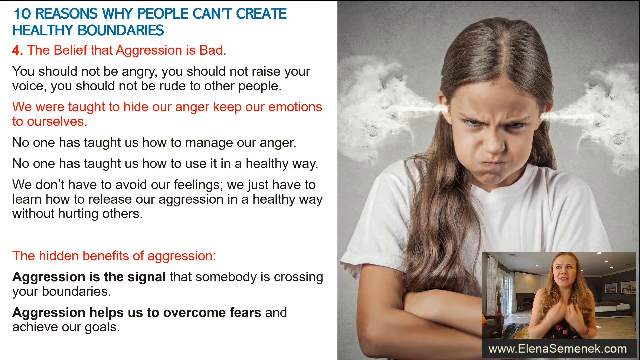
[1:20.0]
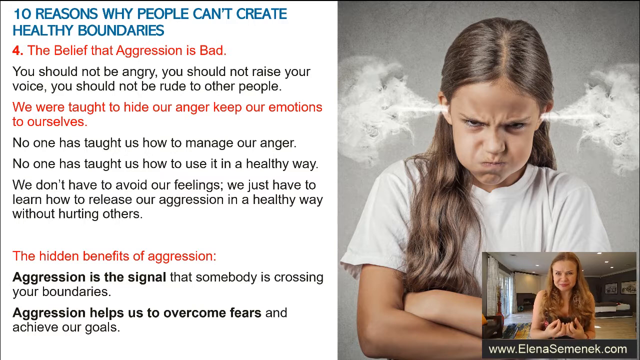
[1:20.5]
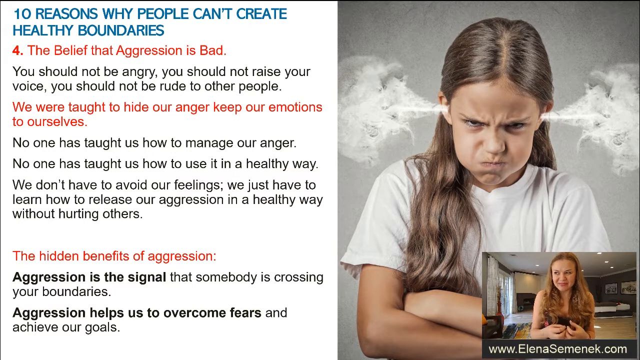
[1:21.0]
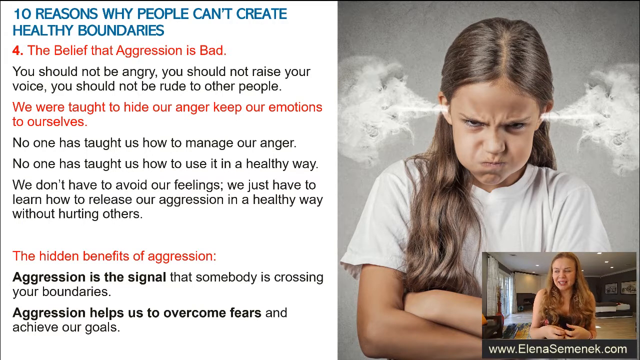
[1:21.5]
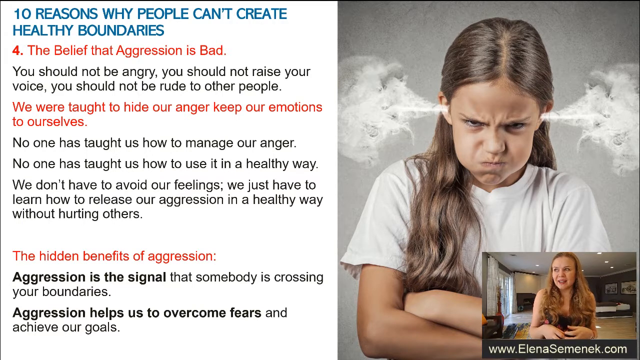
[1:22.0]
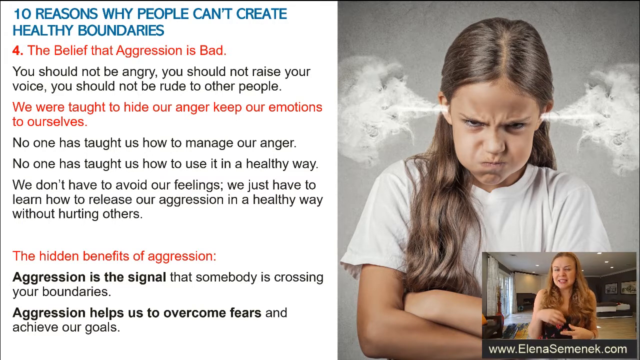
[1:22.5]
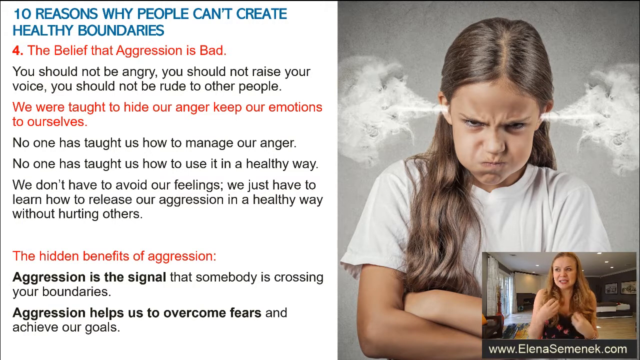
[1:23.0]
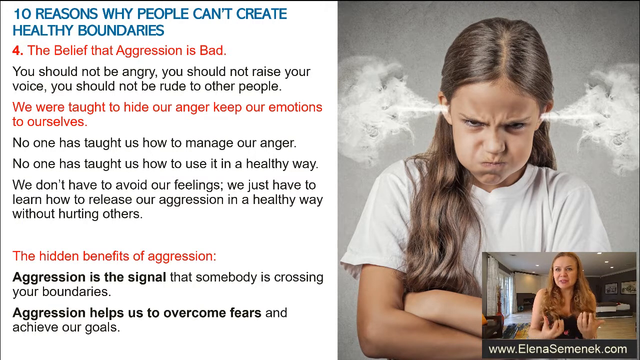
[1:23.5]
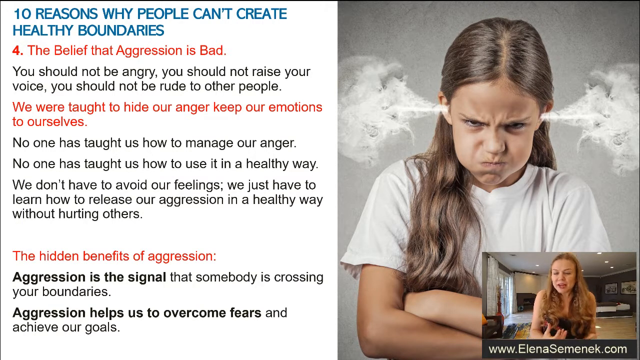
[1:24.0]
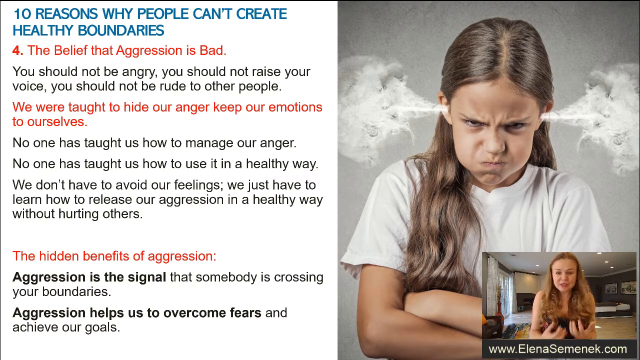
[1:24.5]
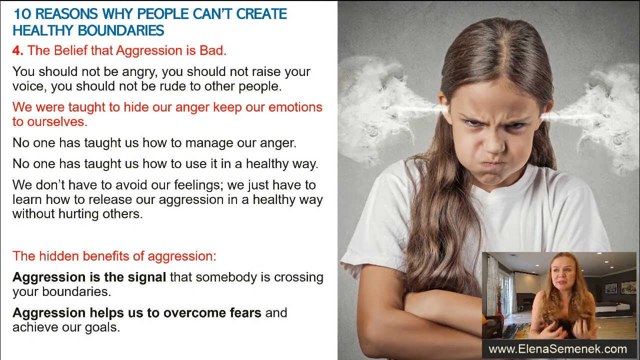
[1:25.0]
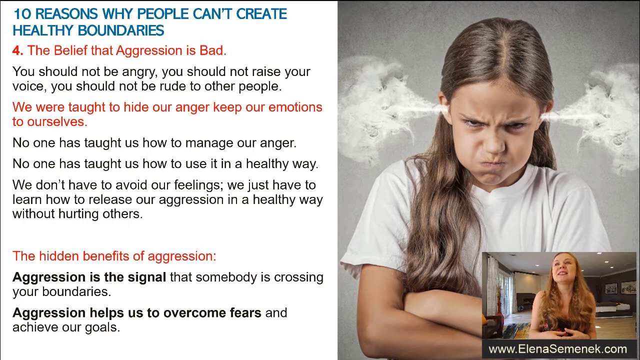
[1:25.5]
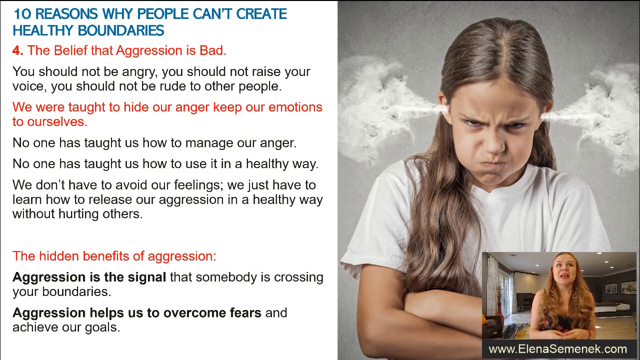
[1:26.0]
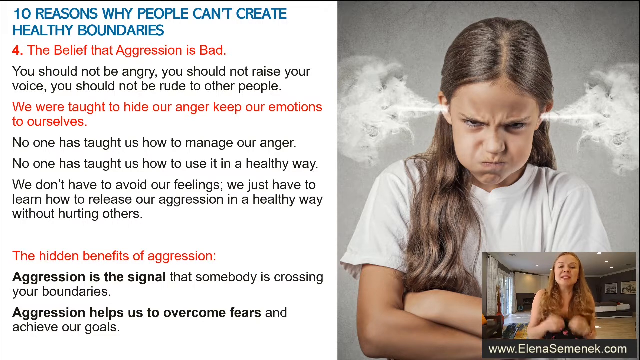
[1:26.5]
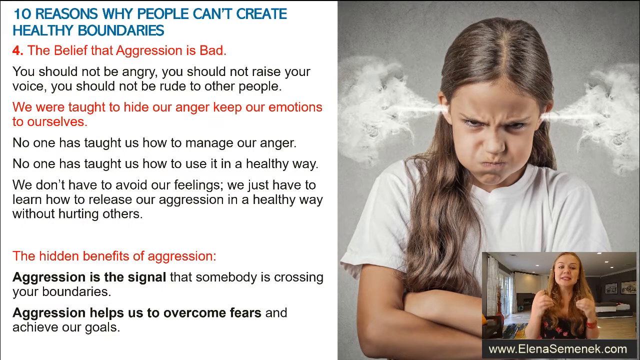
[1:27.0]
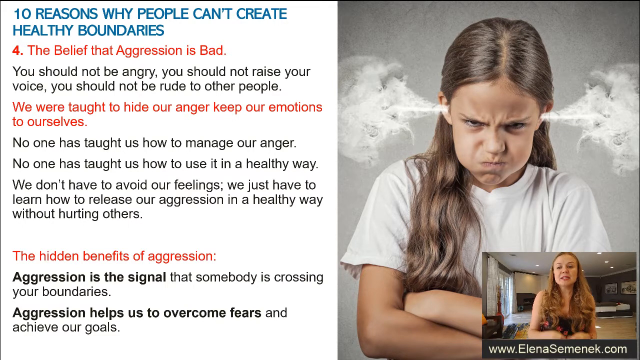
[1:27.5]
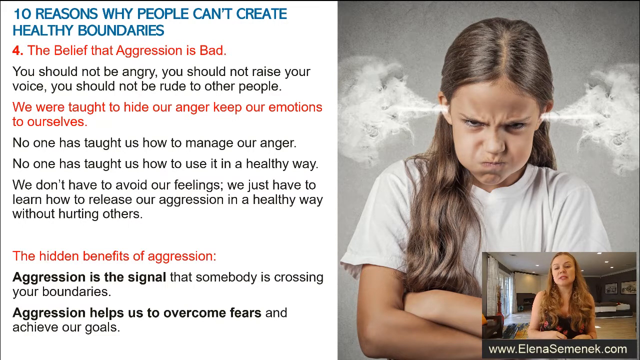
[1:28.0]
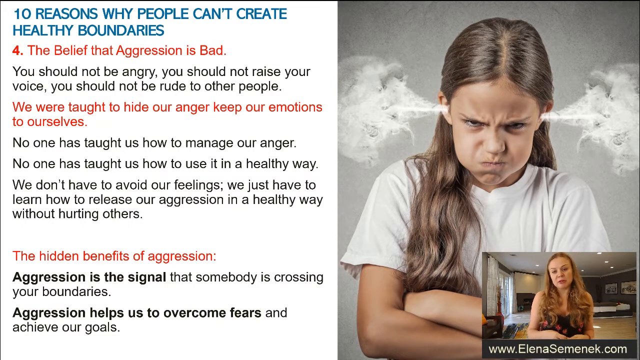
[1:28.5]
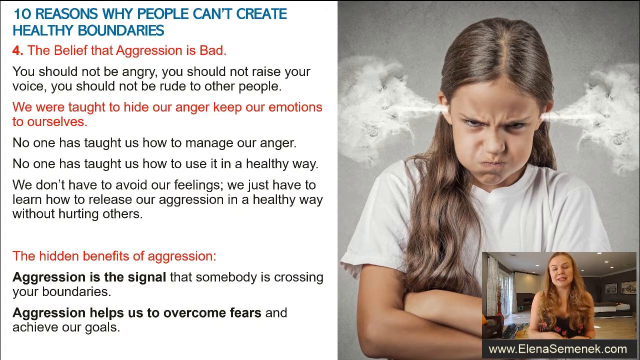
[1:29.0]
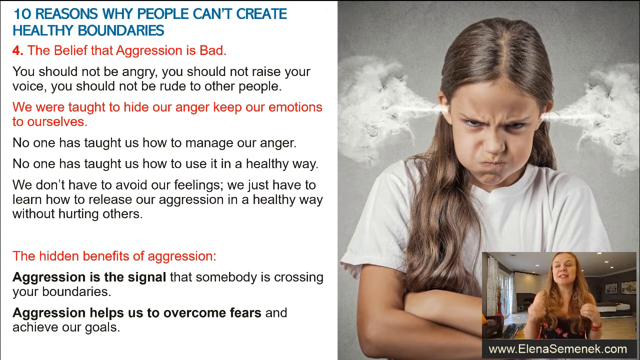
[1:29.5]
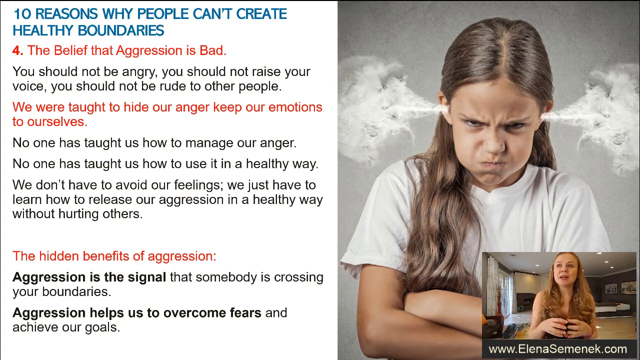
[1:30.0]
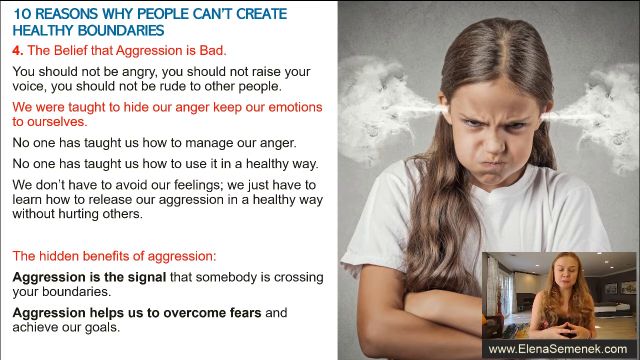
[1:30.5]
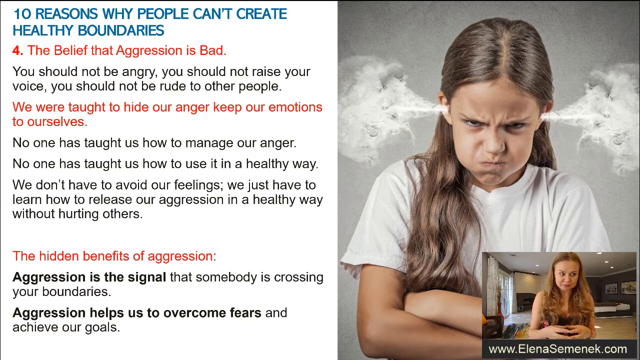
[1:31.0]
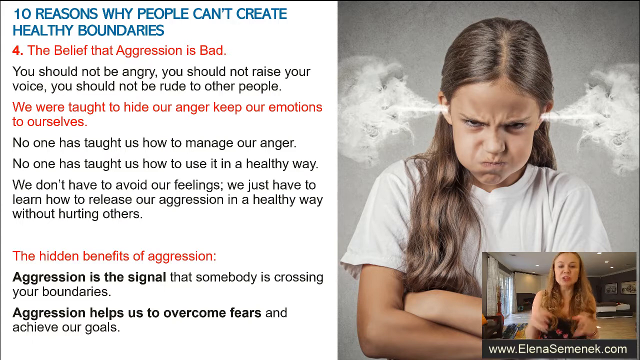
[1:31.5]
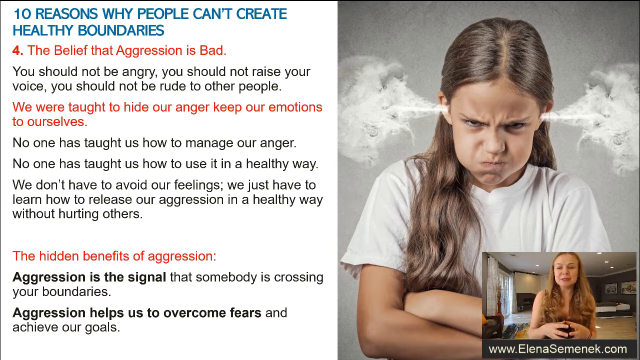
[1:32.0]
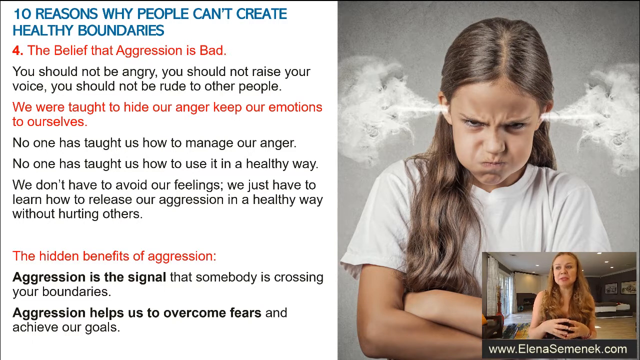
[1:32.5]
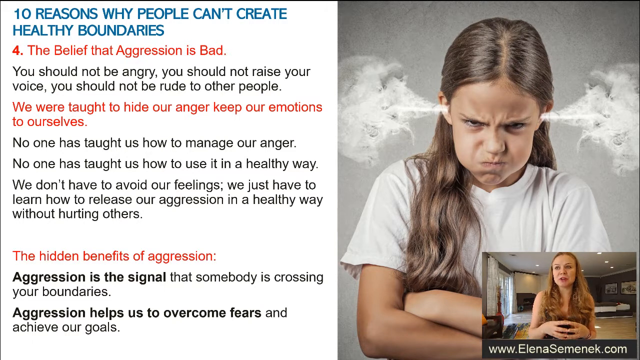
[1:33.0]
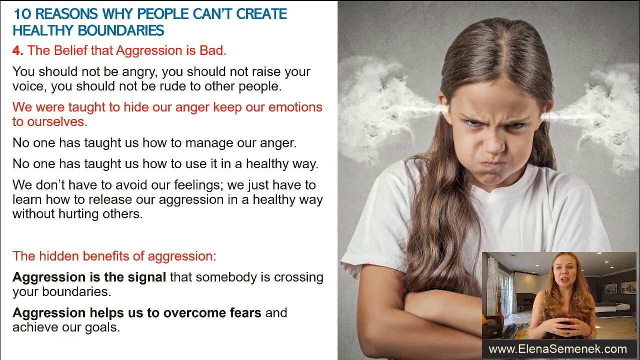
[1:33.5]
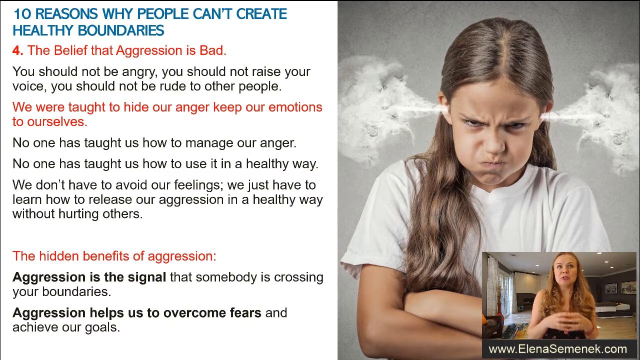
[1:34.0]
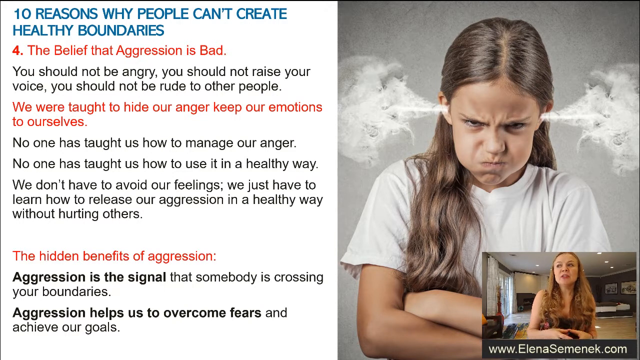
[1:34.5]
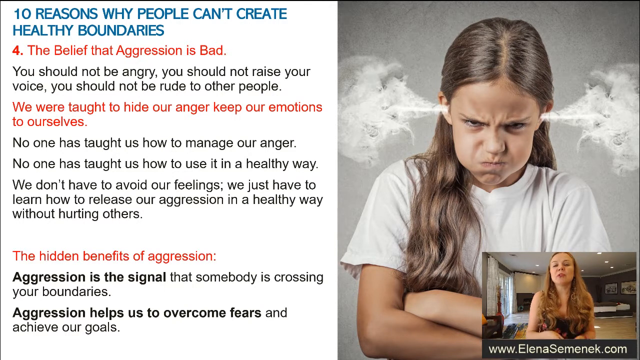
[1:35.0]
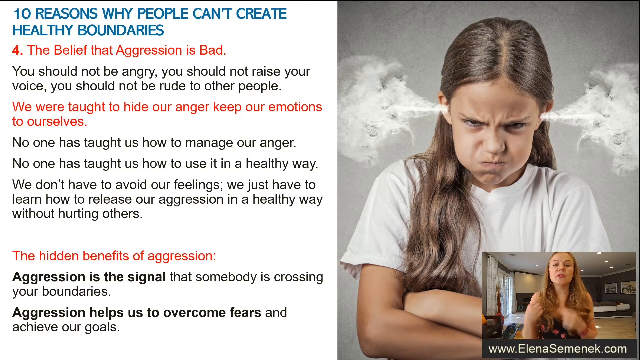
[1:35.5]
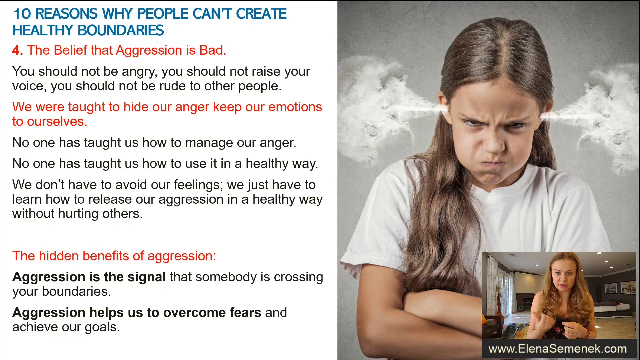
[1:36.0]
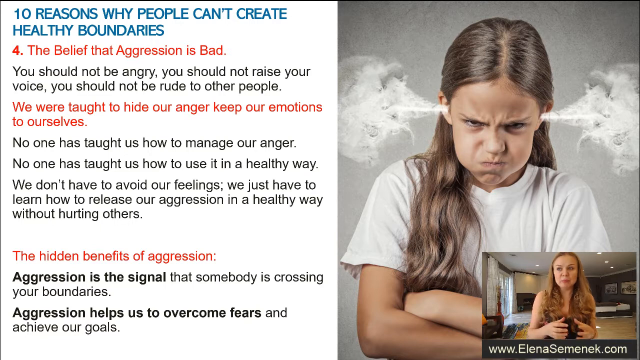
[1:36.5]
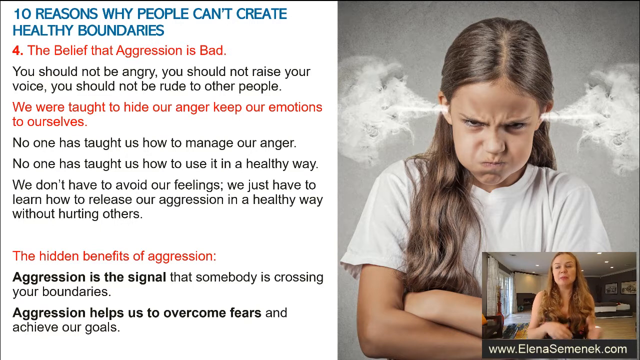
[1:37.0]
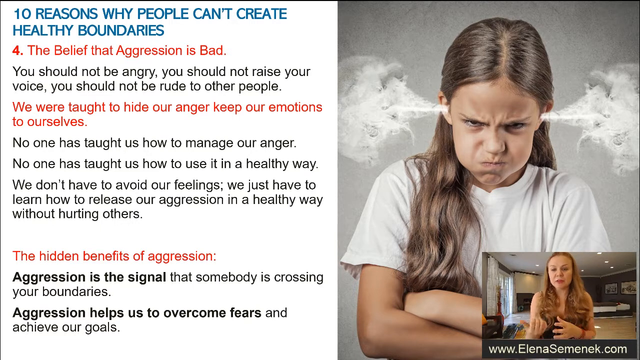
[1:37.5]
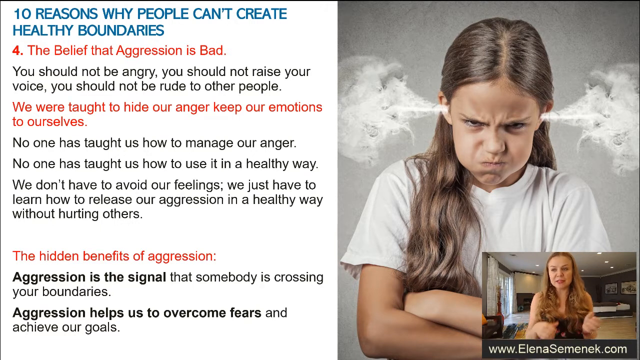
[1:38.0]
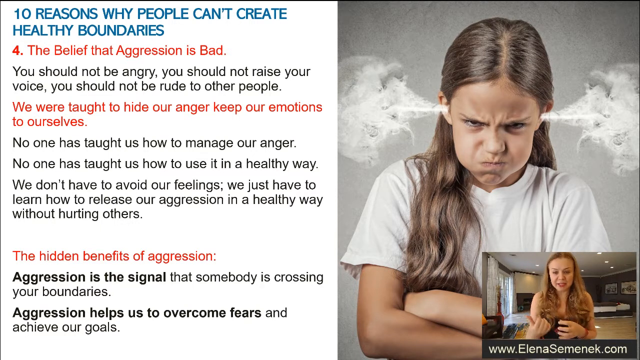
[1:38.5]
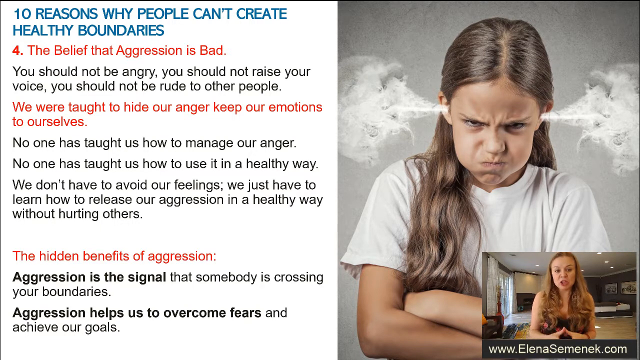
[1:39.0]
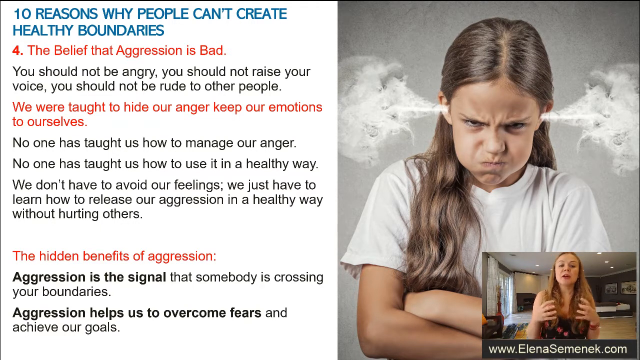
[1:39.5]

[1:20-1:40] The same scene continues, with the screen divided into left and right sides. On the left is text with the heading "10 reasons why people can't create healthy boundaries", followed by three paragraphs with three headings, all in red: "4. The belief that aggression is bad", "We were taught to hide our anger, keep our emotions to ourselves", and "The hidden benefits of aggression". Each paragraph is followed by more information. On the right is a young girl with an angry expression and long brown hair in a centre parting, with steam coming out of her ears. She wears a white t-shirt and has her arms folded. In the bottom right-hand corner a woman narrates the video; she looks as though she is explaining it, gesticulating a lot in what appears to be the rhythm of her speech.